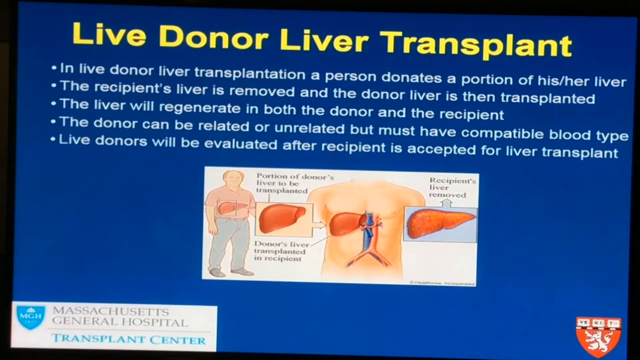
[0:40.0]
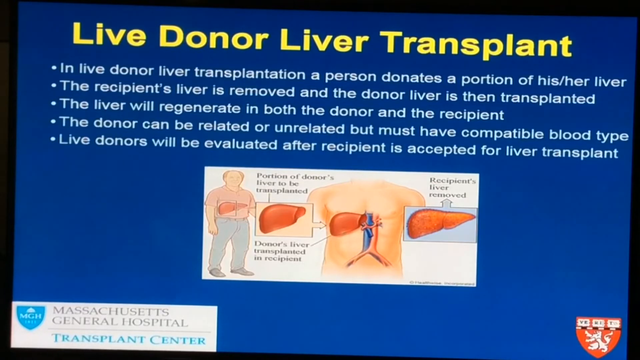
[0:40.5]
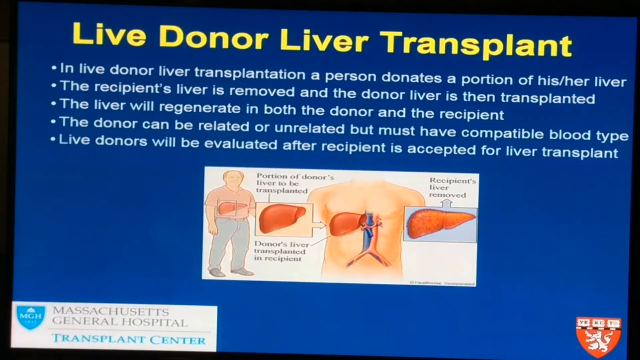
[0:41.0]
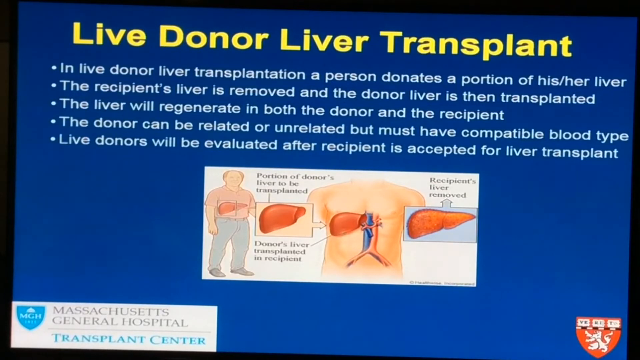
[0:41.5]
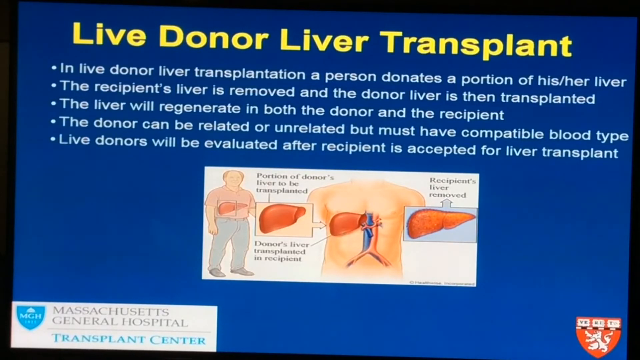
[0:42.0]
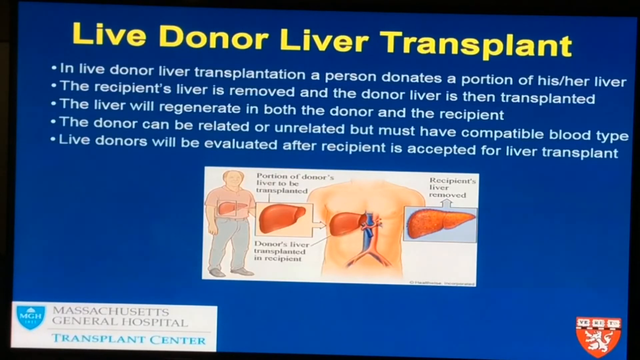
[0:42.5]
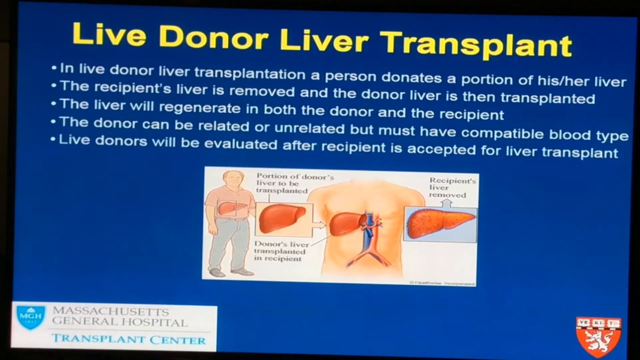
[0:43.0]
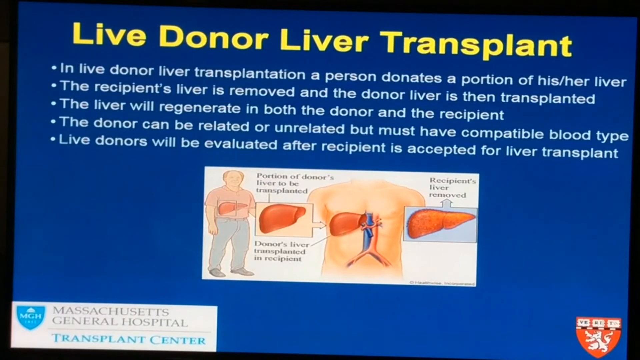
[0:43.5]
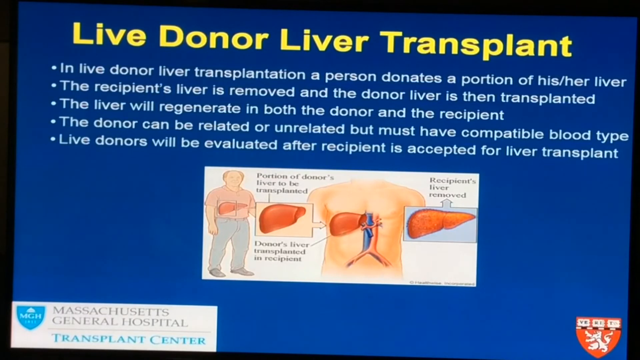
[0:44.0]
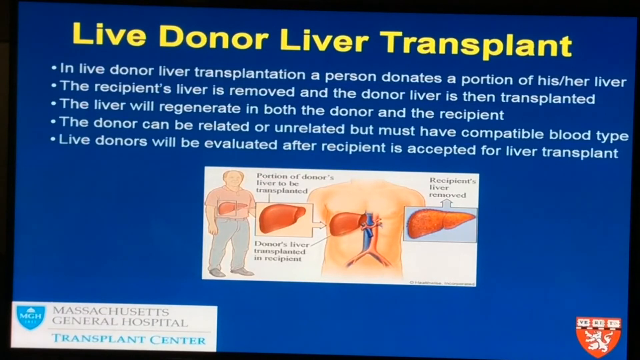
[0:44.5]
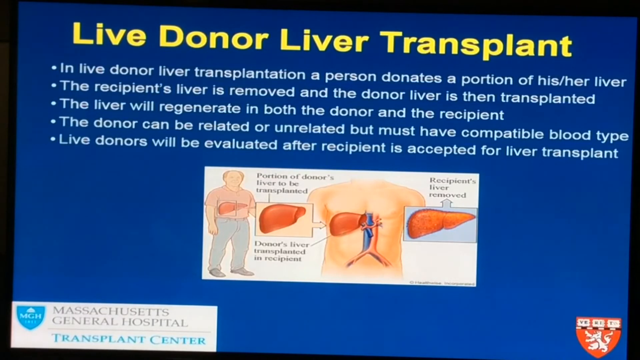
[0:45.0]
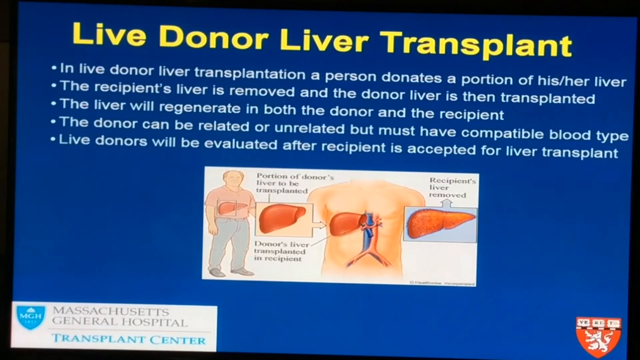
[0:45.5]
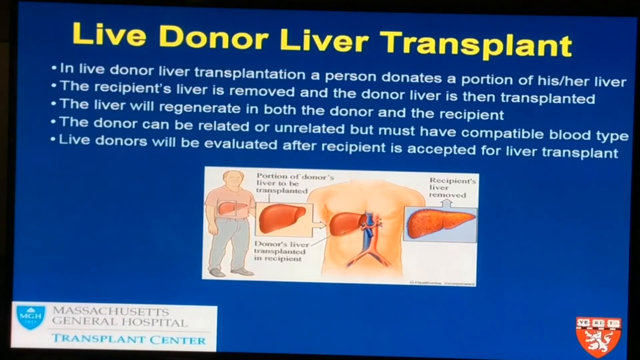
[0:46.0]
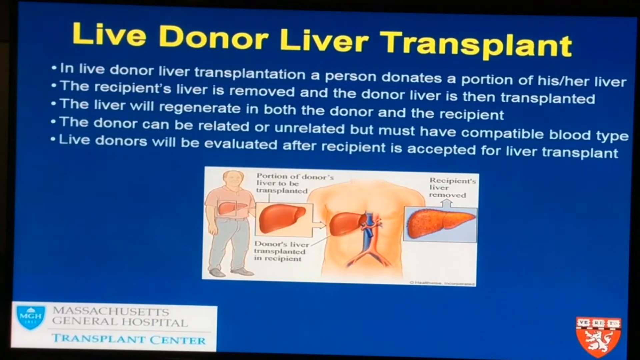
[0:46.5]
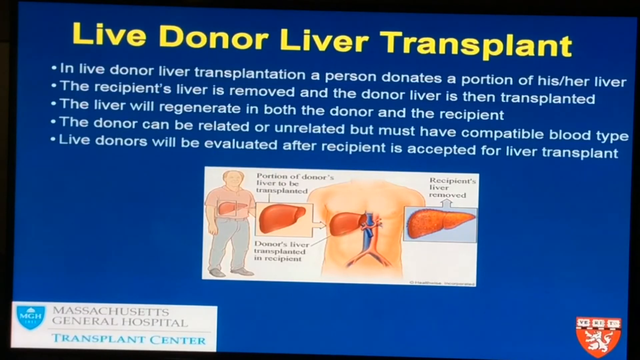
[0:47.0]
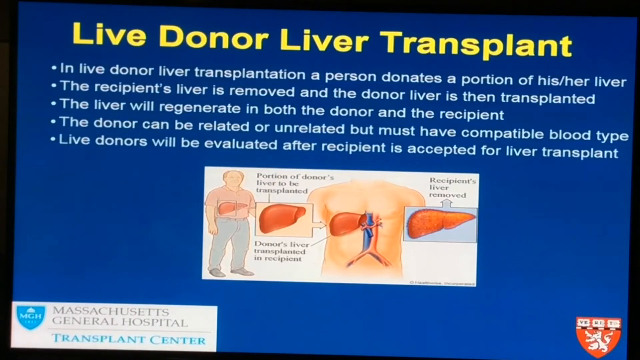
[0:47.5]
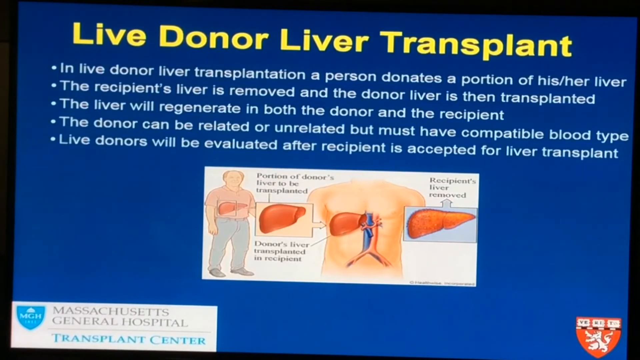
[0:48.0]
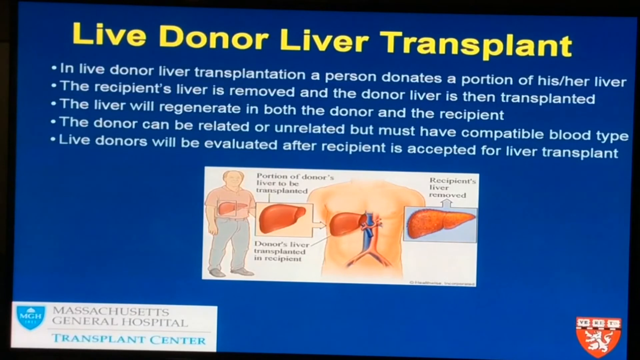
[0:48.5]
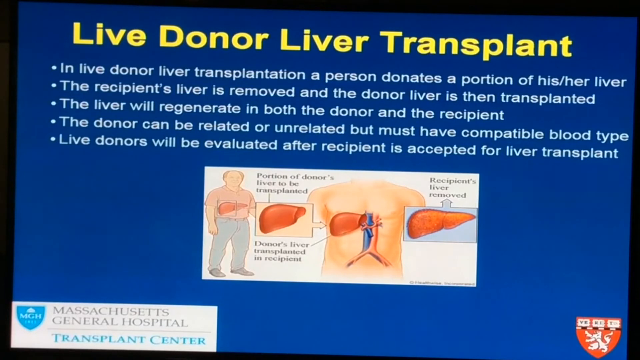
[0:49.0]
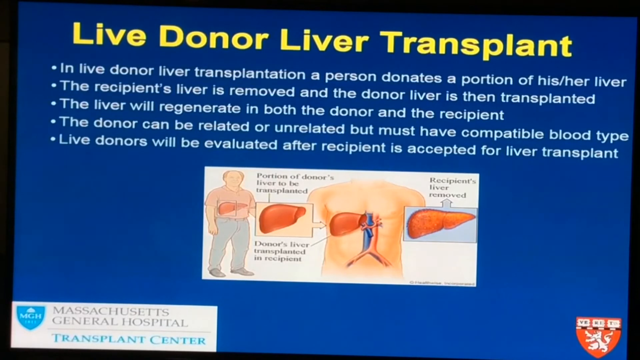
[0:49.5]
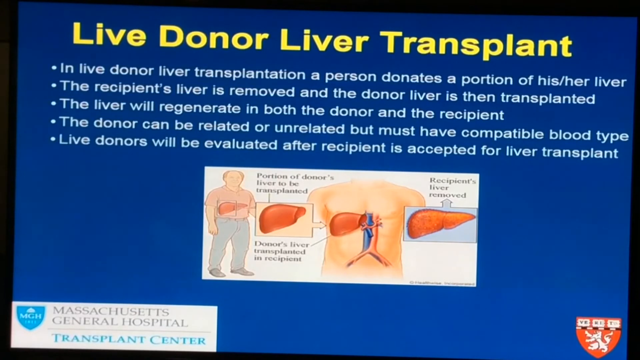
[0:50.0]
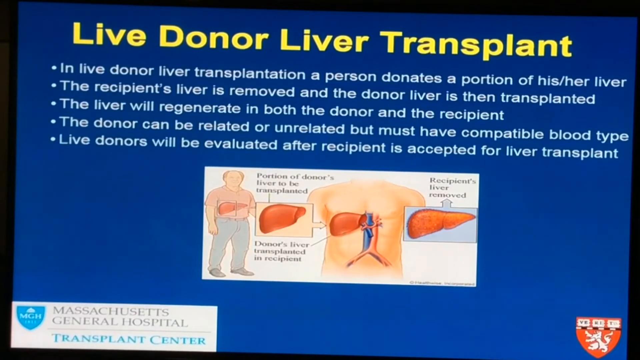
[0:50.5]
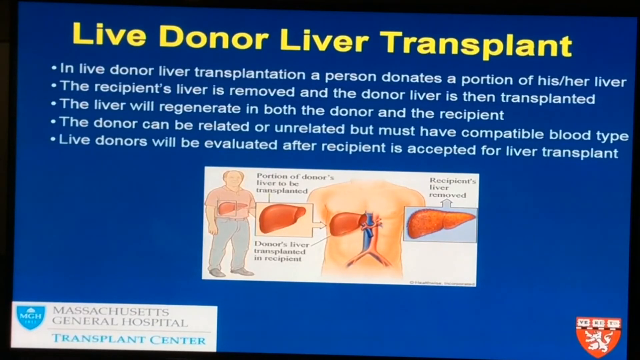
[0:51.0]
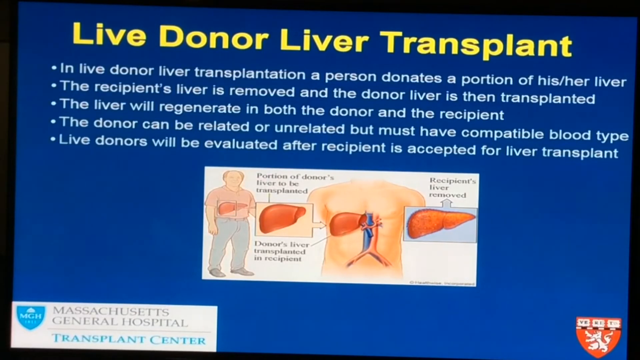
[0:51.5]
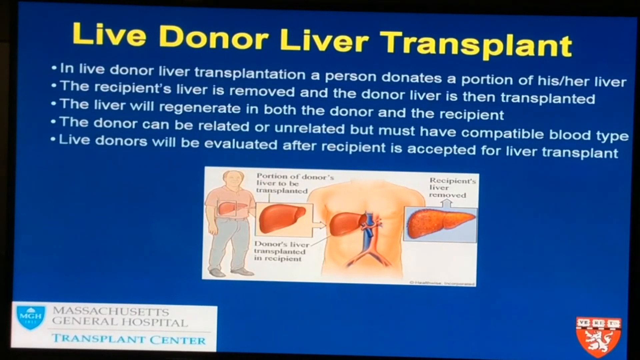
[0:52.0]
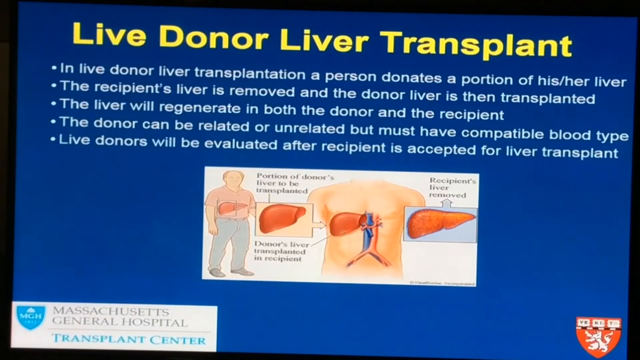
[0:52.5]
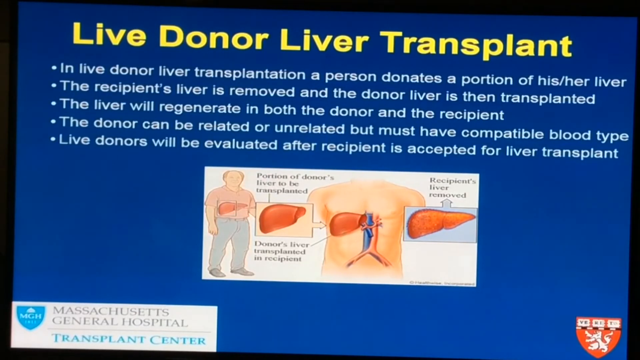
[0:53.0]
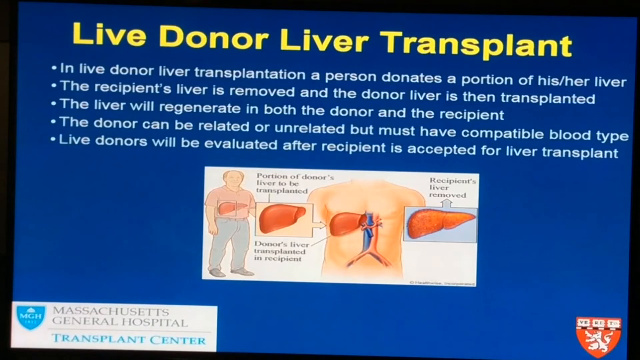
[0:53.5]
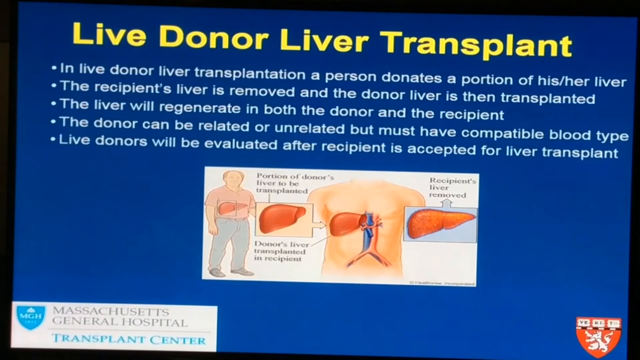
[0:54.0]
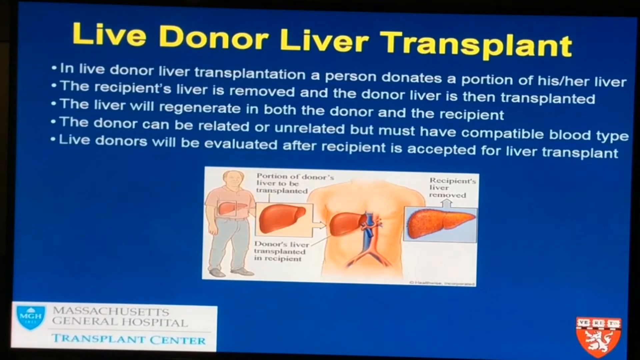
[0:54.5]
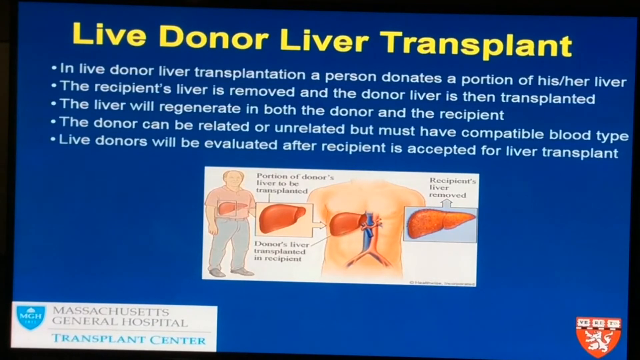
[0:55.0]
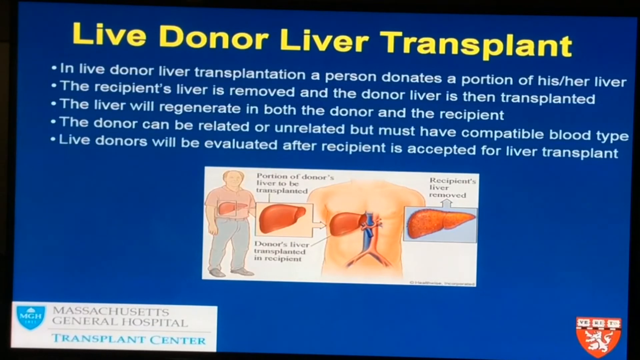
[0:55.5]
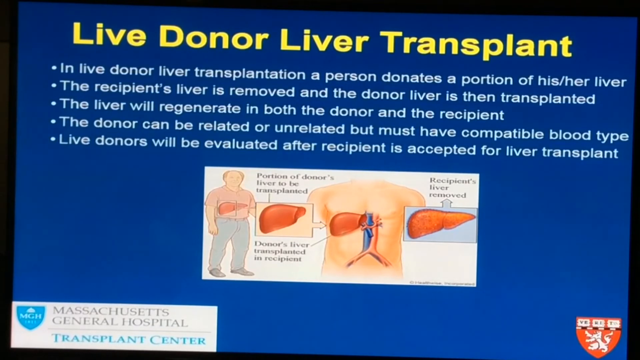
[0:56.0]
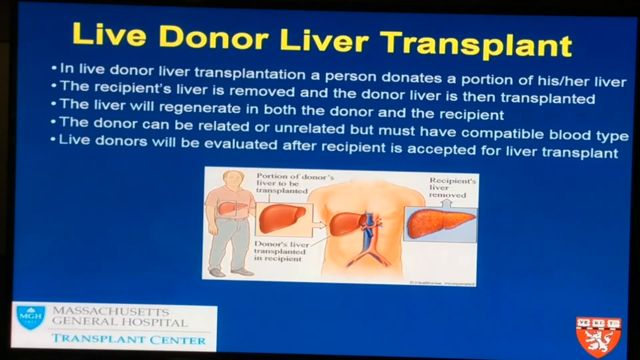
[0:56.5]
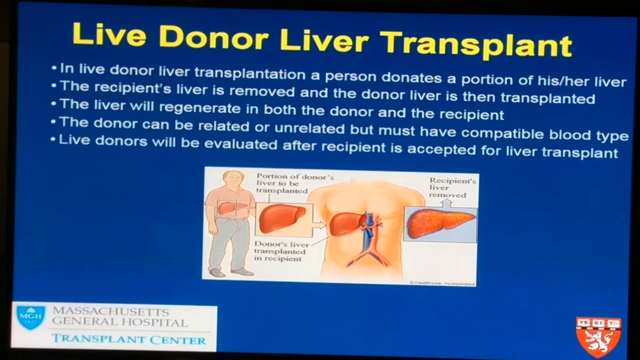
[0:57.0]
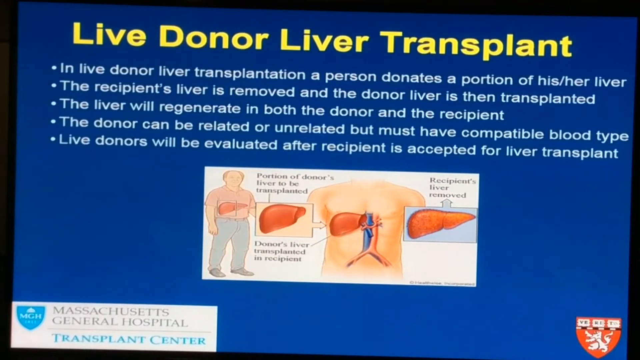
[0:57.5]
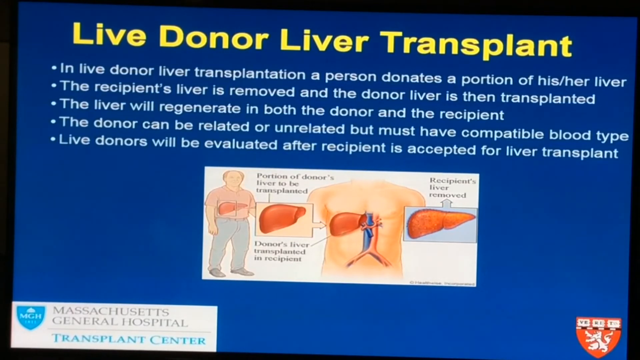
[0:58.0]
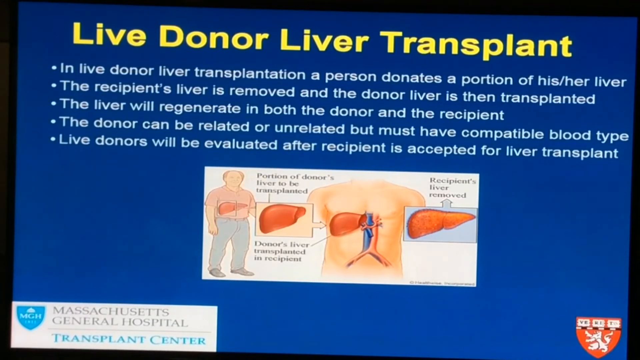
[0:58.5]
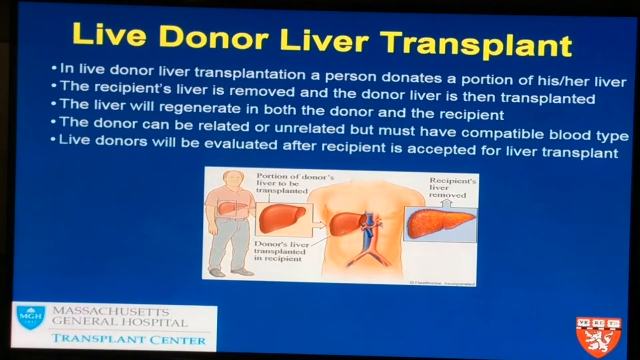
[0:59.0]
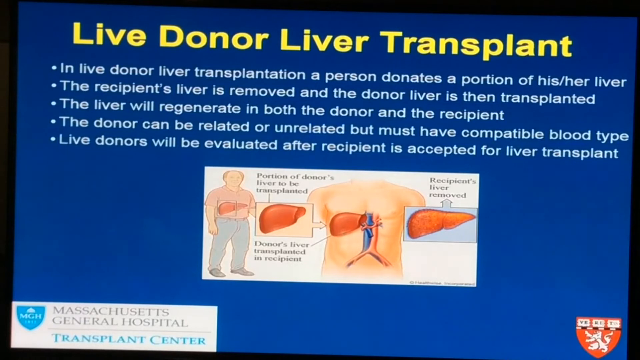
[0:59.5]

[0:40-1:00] A blue screen has yellow letters at the top reading "live donor liver transplant". Below, five white dots run down, each with a sentence to its right: "in live donor liver transplantation, a person donates a portion of his or her liver"; "the recipient's liver is removed and the donor liver is then transplanted"; "the liver will regenerate in both the donor and the recipient"; "the donor can be related or unrelated, but must have compatible blood type"; and "the donors will be evaluated after recipient is accepted for the liver transplant". Below that is a white banner with a depiction of a shirtless man showing two large blood vessels, one blue and one red. To the left of the blue blood vessel, underneath the man's right pectoral, is a liver. An enlarged liver appears in a small picture to the left of that, and another enlarged liver is to the right. On the left of the banner is a man wearing a pink shirt and blue jeans, with his liver shown through his shirt.